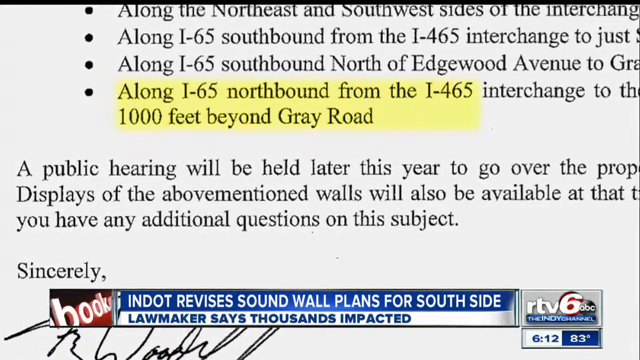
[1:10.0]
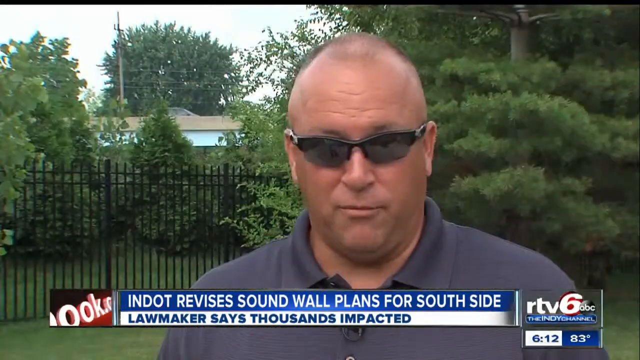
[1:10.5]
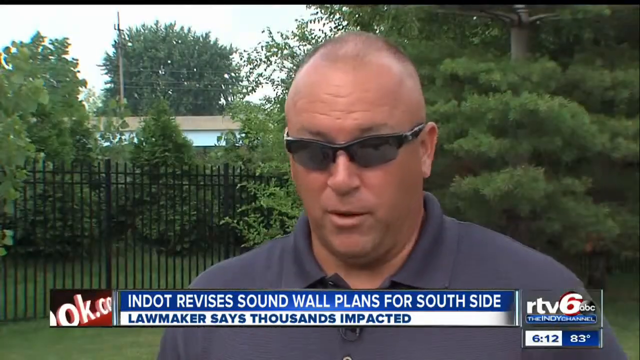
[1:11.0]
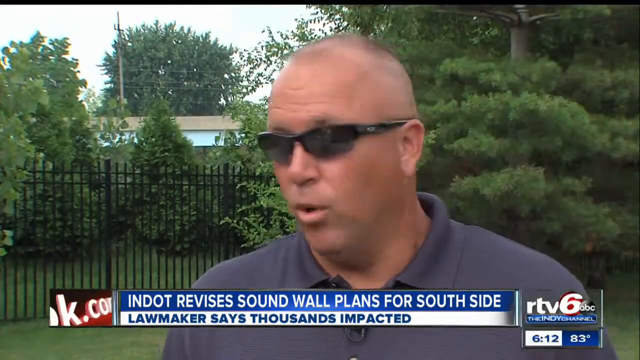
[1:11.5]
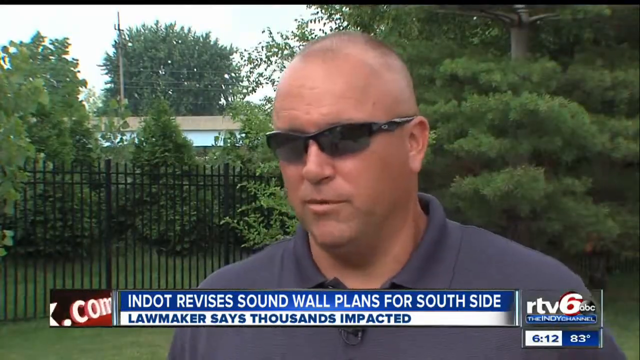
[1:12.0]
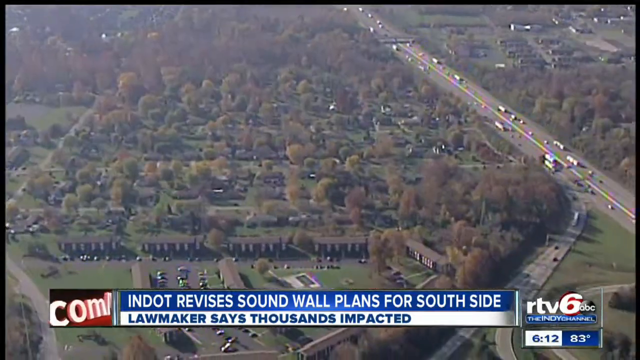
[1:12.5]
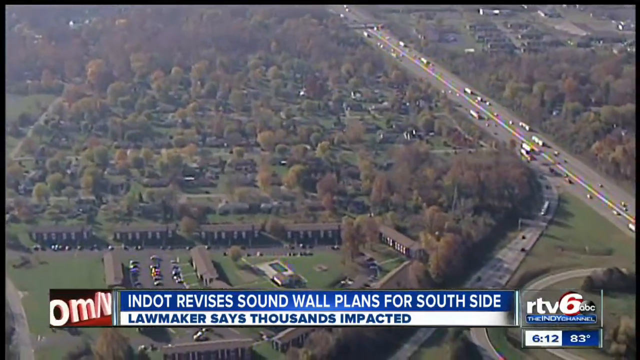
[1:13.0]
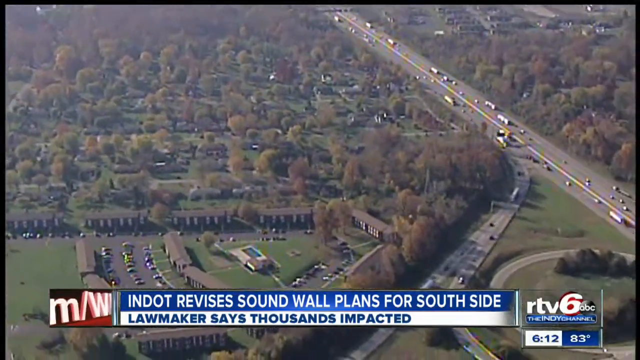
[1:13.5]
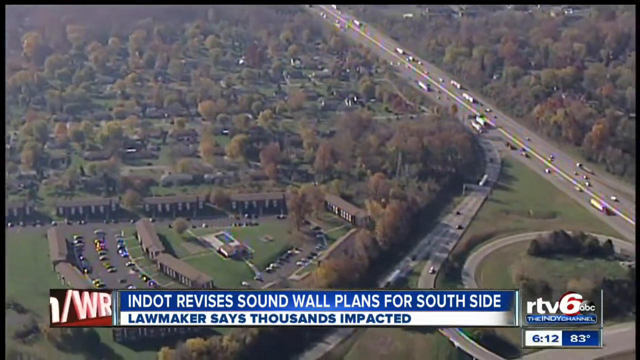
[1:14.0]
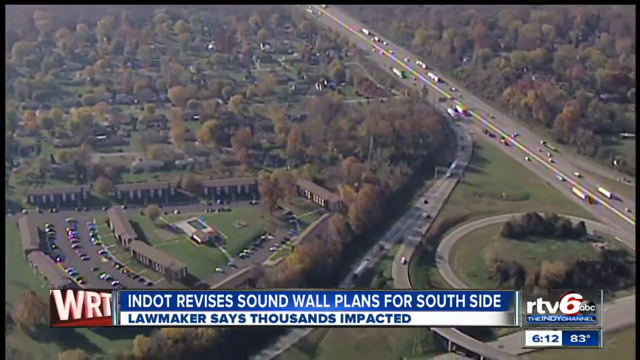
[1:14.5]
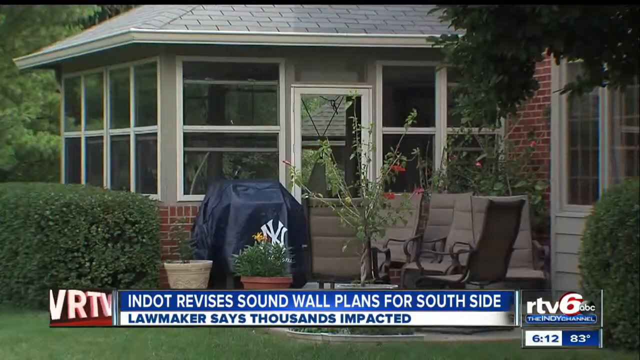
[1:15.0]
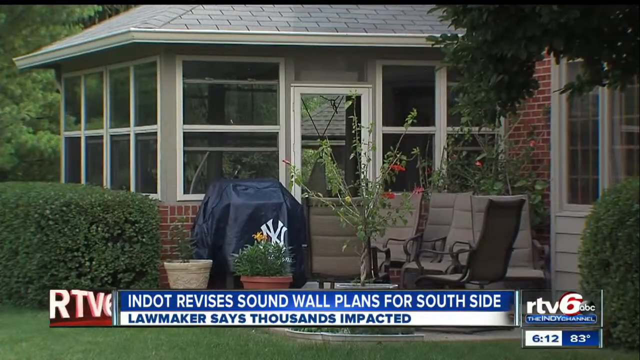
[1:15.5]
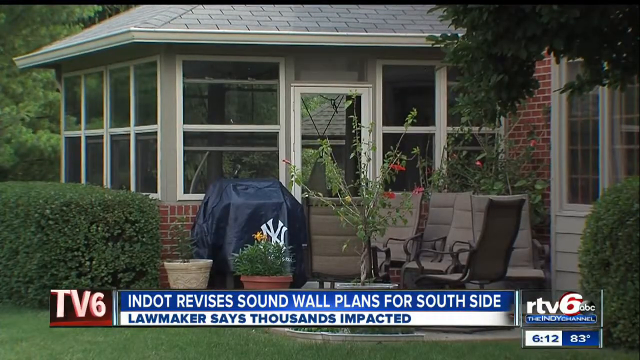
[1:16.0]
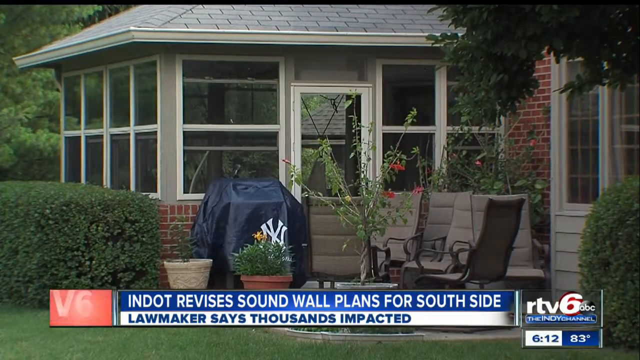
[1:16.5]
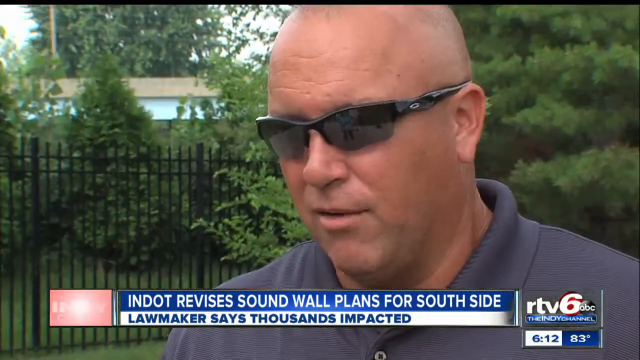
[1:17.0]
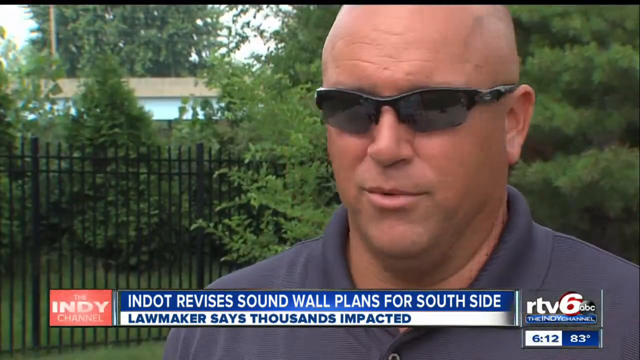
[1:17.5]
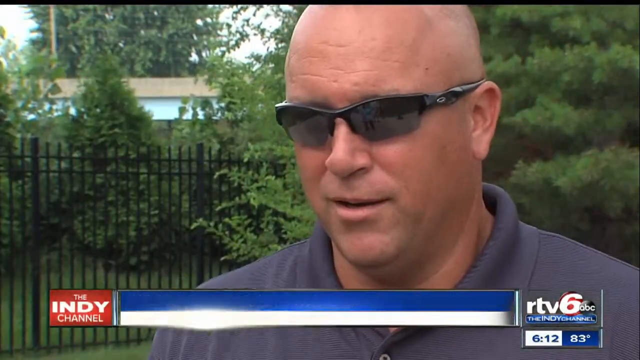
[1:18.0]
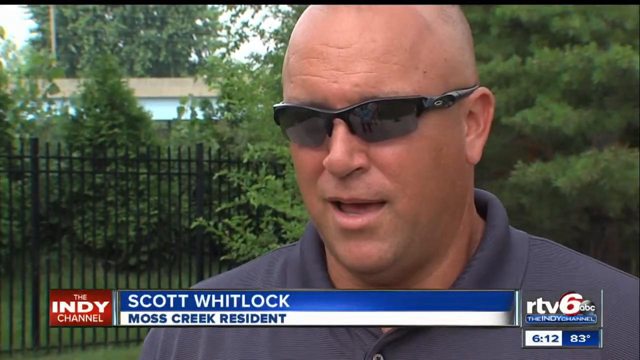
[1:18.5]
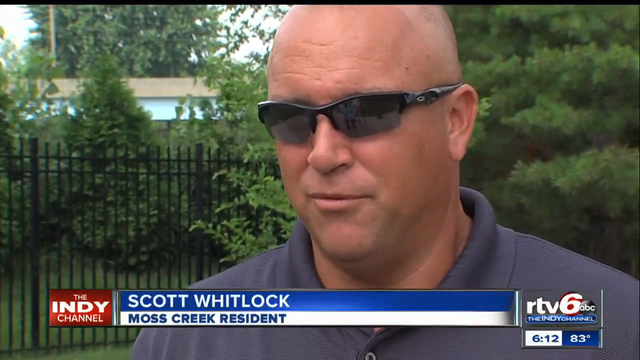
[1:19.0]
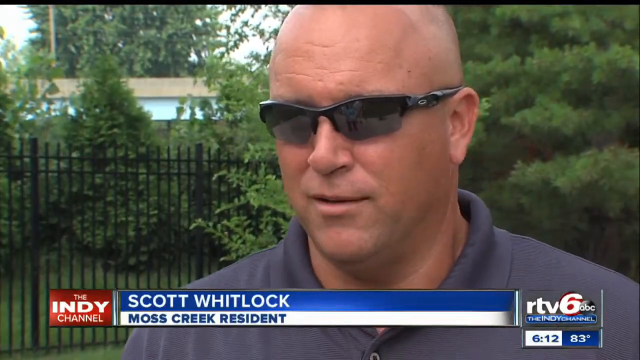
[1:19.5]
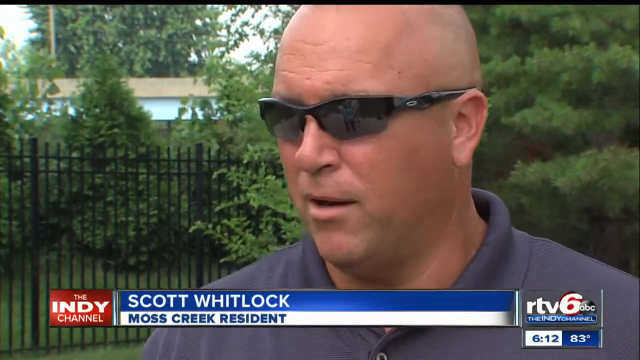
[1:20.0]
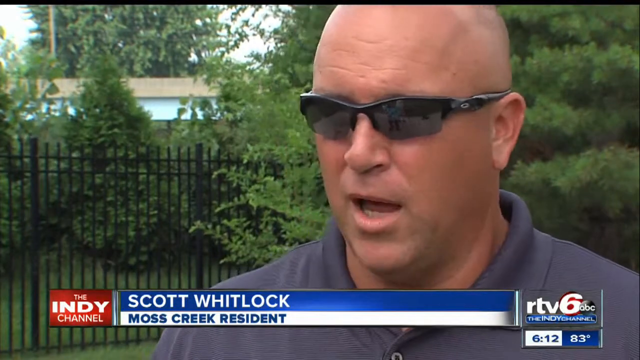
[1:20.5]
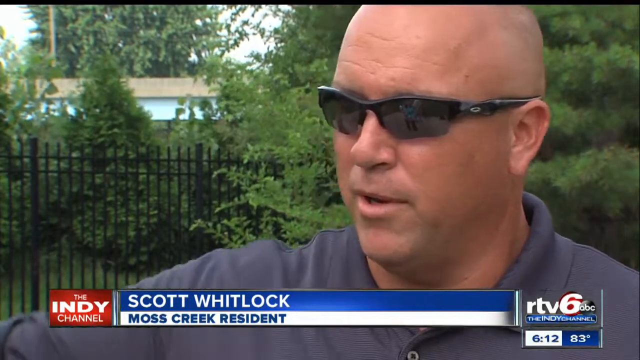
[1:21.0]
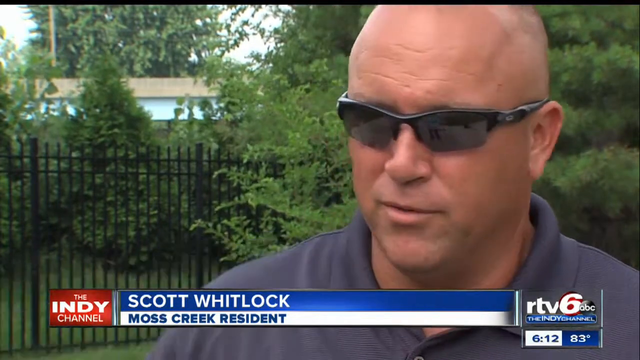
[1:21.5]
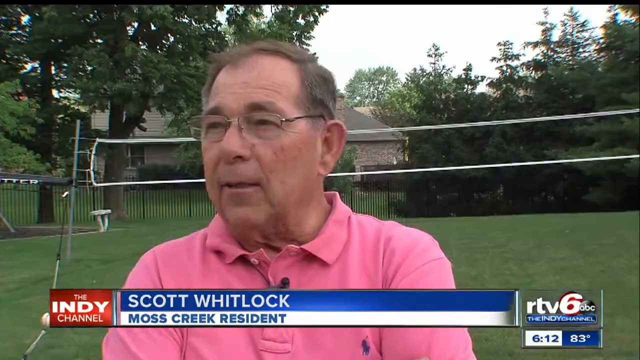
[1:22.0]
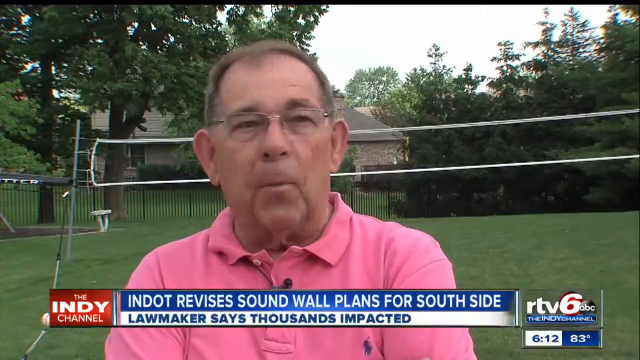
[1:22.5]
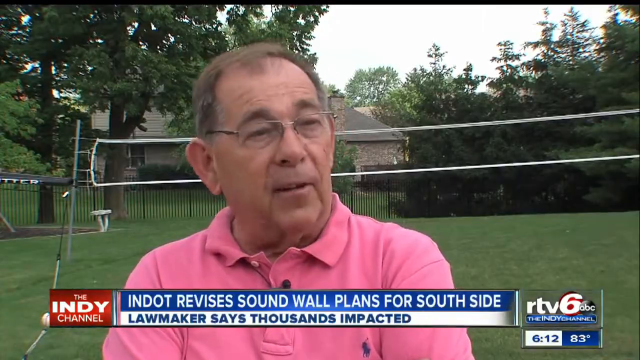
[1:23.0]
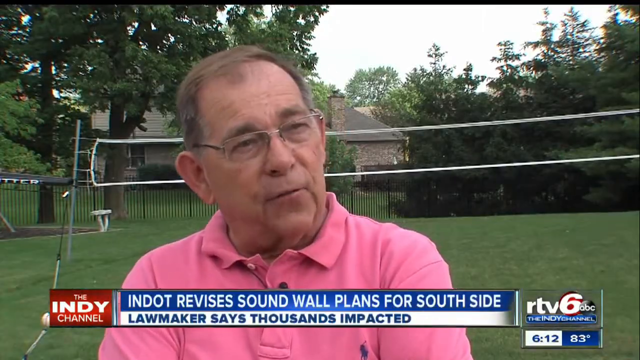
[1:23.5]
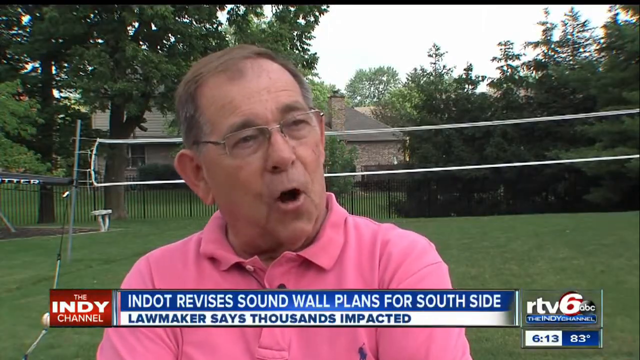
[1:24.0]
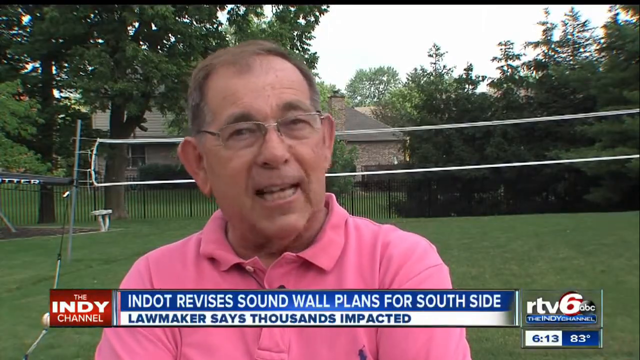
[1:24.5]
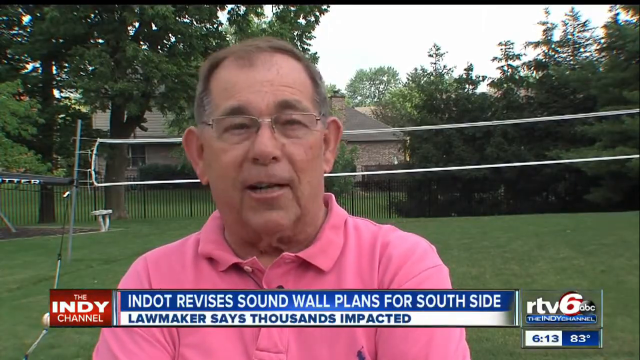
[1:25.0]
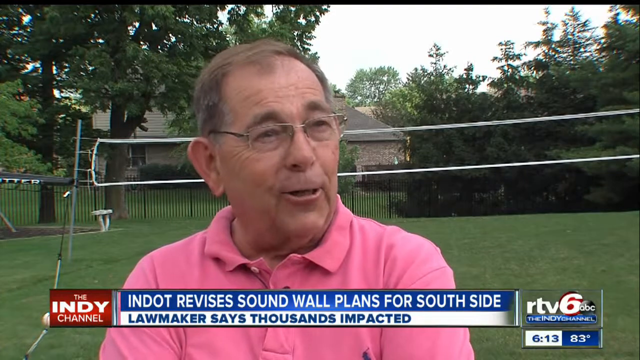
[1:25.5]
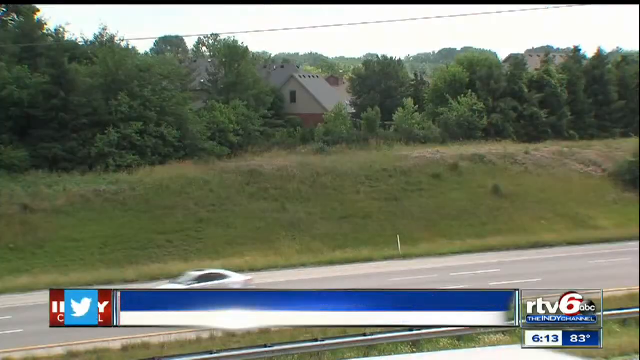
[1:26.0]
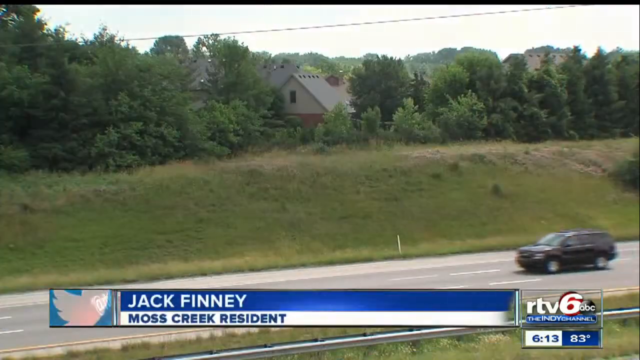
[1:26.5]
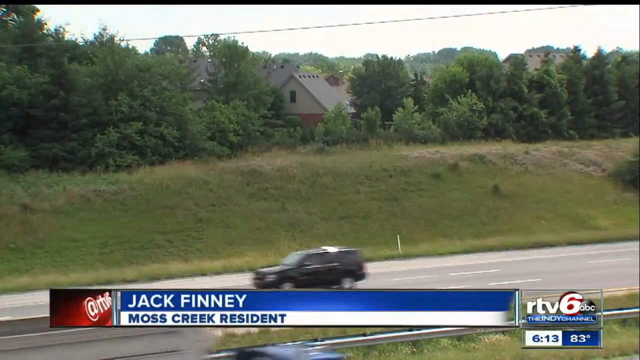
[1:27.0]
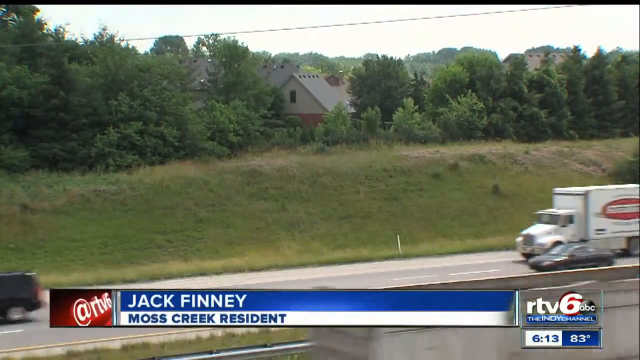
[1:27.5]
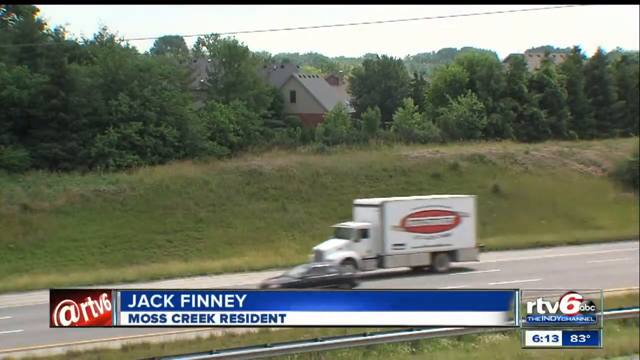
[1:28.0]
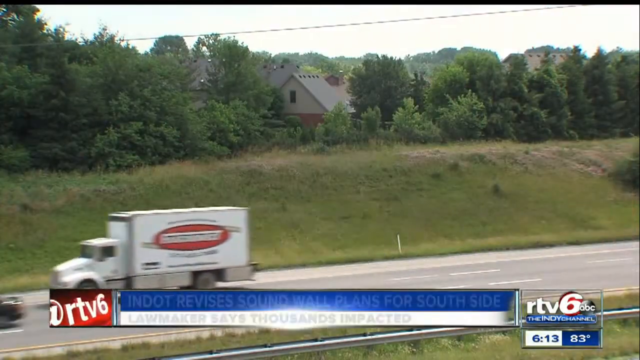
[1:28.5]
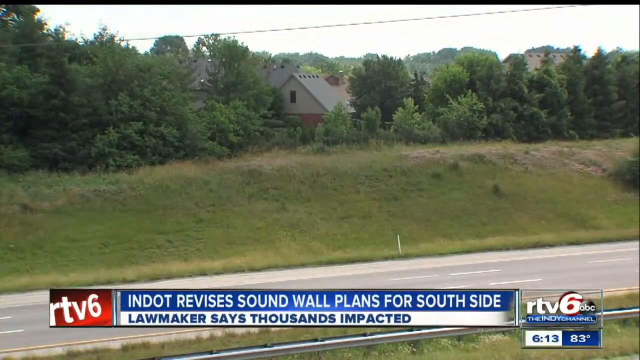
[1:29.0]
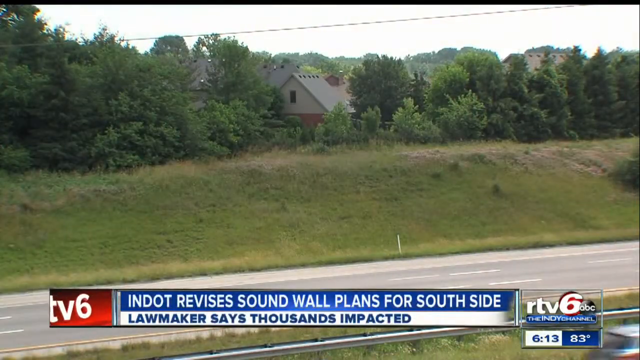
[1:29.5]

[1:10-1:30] Once the sound barrier is installed, people are expected to be able to sit outside their houses, on their porches and in their backyards with their family without being disturbed by traffic noise.